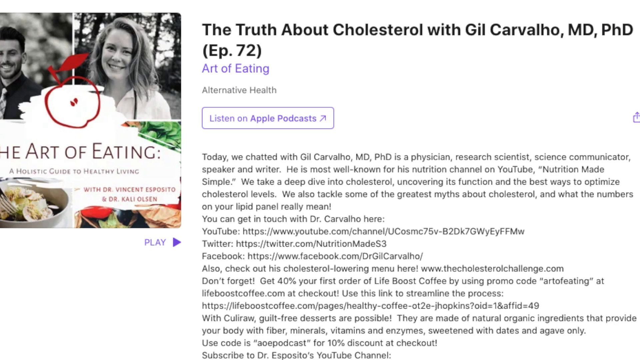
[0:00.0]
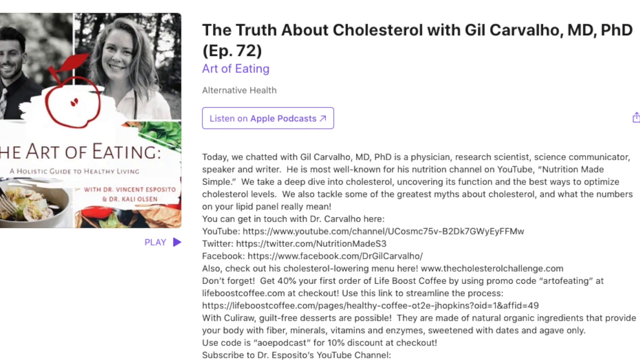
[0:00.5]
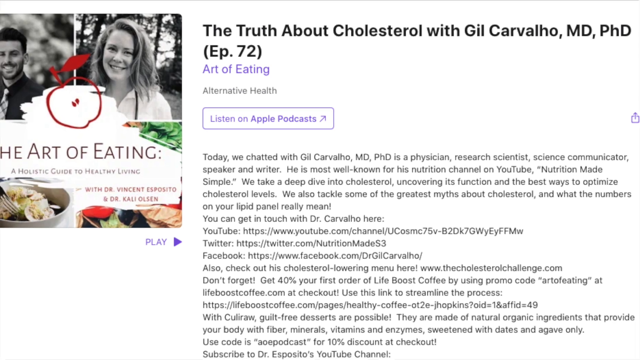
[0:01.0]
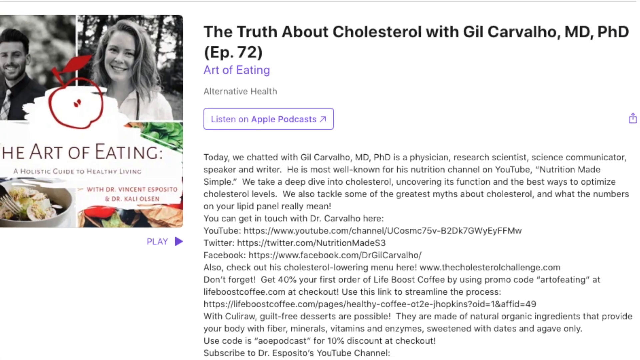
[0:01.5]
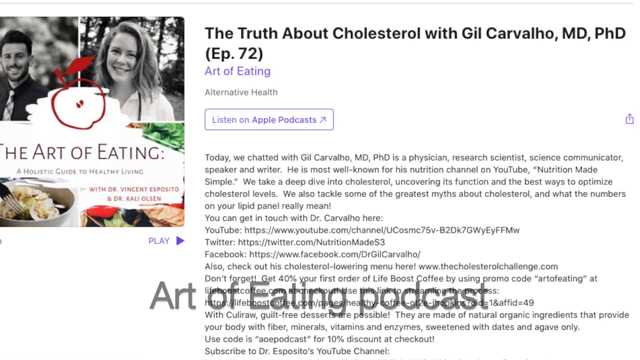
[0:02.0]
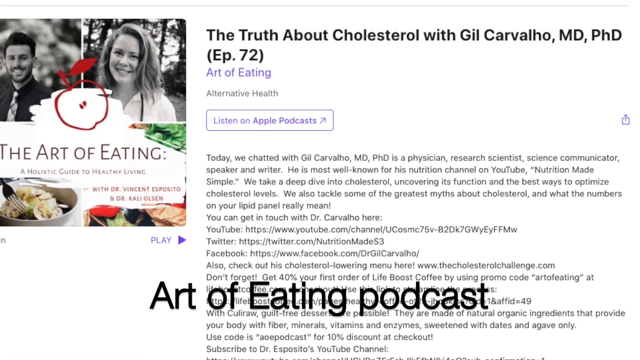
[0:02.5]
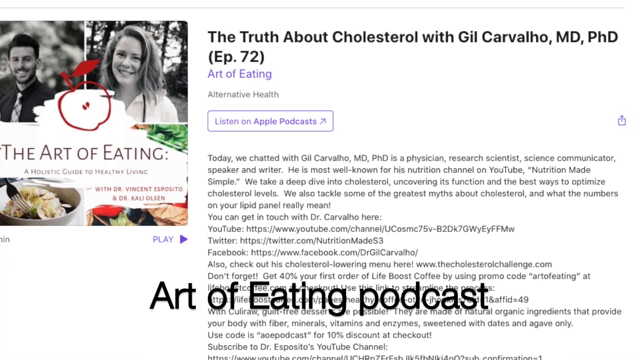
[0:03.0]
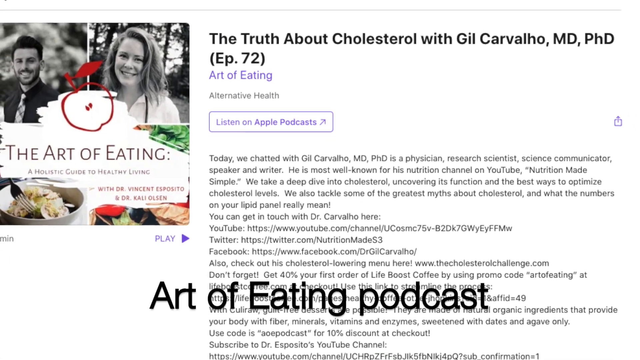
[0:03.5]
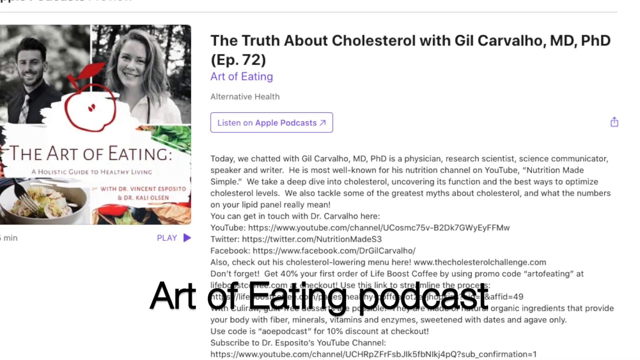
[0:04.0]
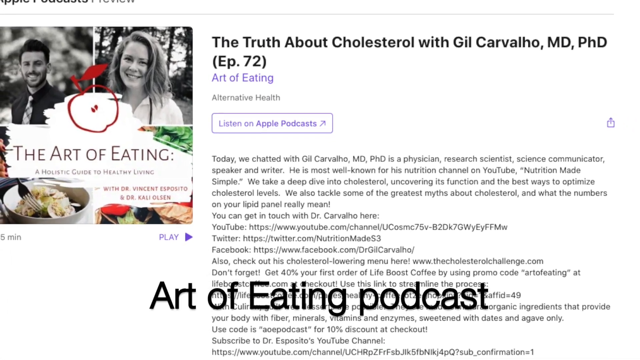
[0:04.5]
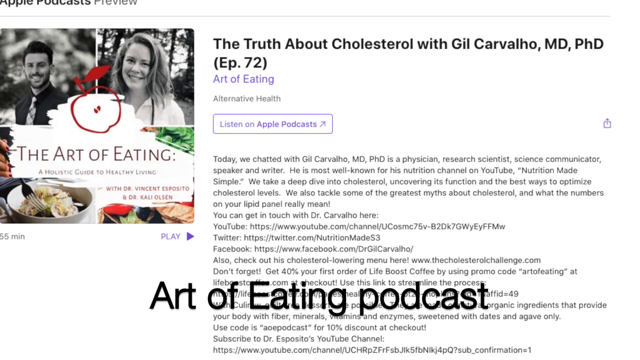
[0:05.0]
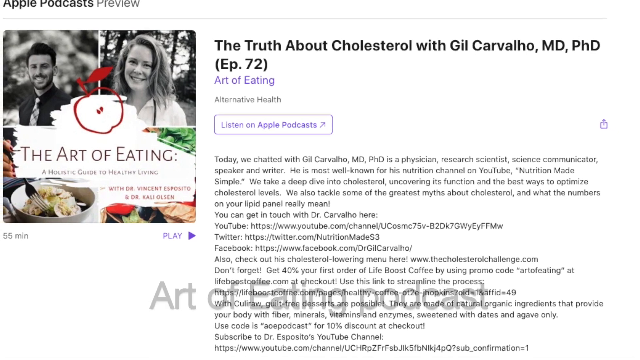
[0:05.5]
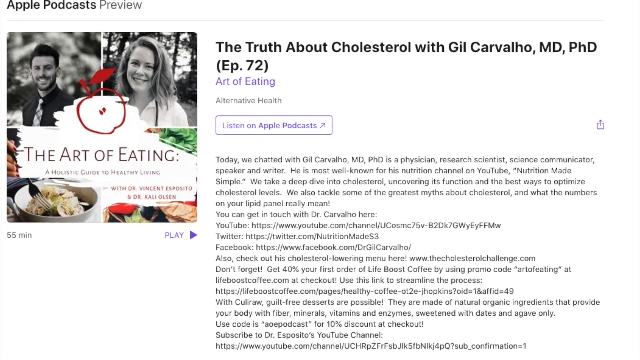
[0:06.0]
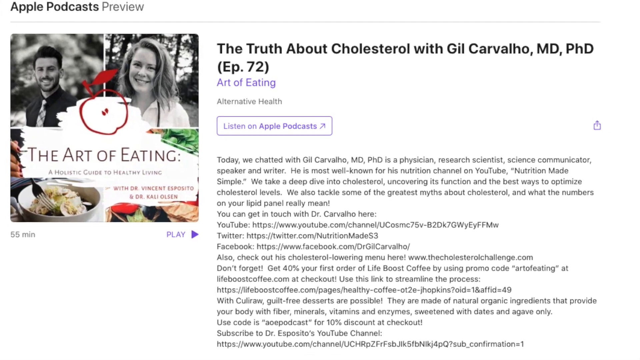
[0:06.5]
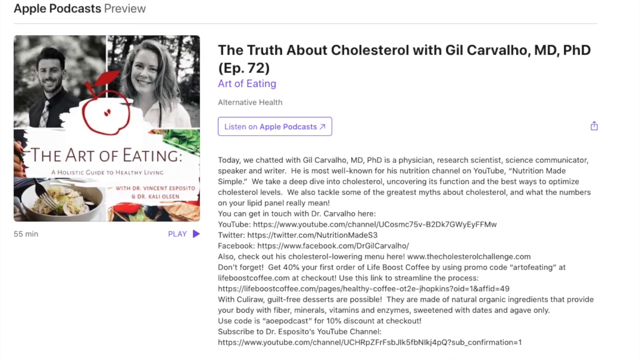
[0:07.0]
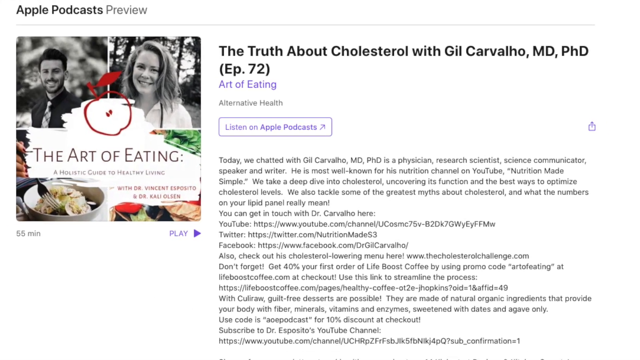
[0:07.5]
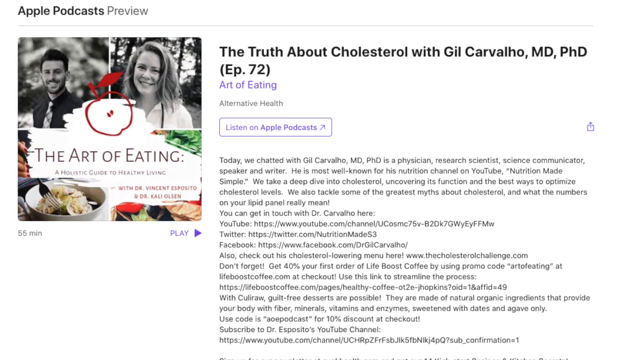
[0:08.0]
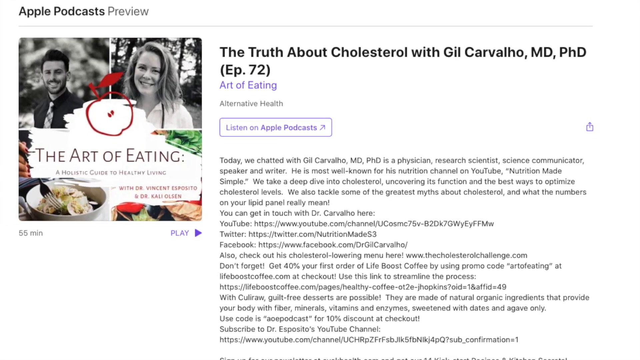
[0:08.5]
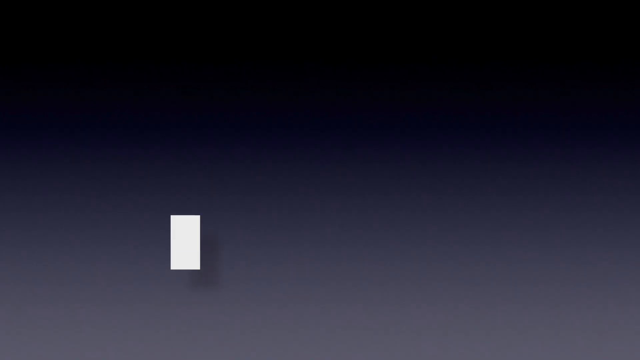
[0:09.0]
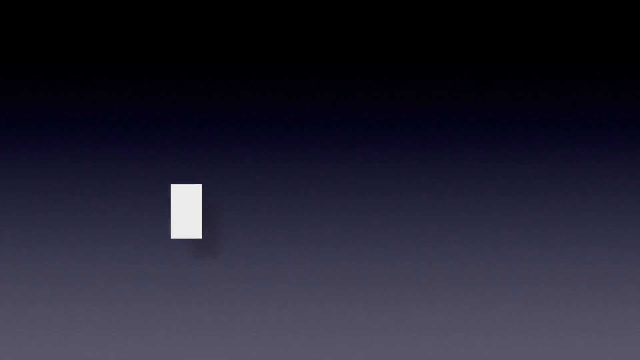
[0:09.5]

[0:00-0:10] The video opens on a white background. In the upper left corner is an image of a young woman on the right and a young man on the left, both in black and white and both Caucasian. Below it is an image of healthy foods; a bowl on the left apparently holds what looks like a salad with cut-up hard-boiled egg. In the center, black text reads "The Art of Eating, A Holistic Guide to Healthy Living with Dr. Vincent Esposito and Dr. Callie Olson." To the right, black text reads "The Truth About Cholesterol with Gil Carvalho, MD, PhD, Episode 72, Art of Eating, Alternative Health." A purple button below says "Listen to Apple Podcasts." What might be a quick description says "Today we chatted with Gil Carvalho, MD, PhD, who is a physician, research scientist, and science communicator, speaker, and writer most well known for his nutrition channel on YouTube called Nutrition Made Simple." The YouTube channel is listed, along with a Twitter and Facebook address. As the image gets smaller, moving further away, black text appears at the bottom of the screen reading "Art of Eating Podcast."